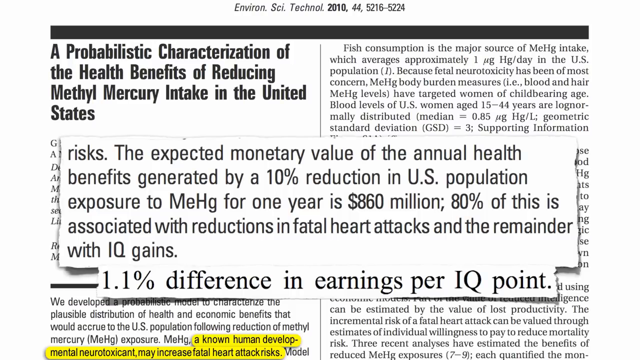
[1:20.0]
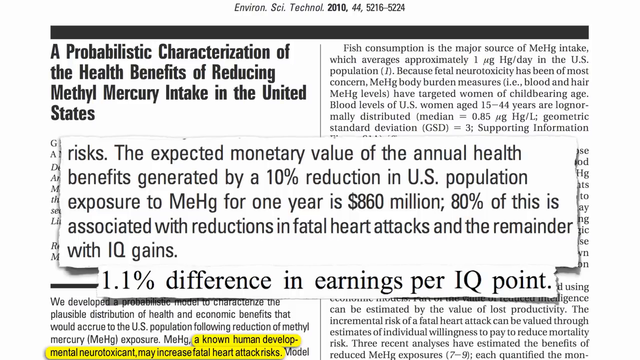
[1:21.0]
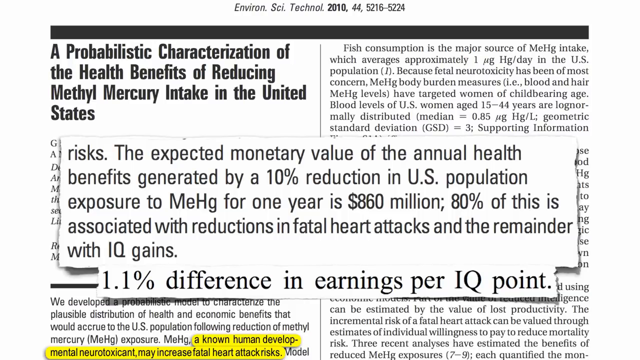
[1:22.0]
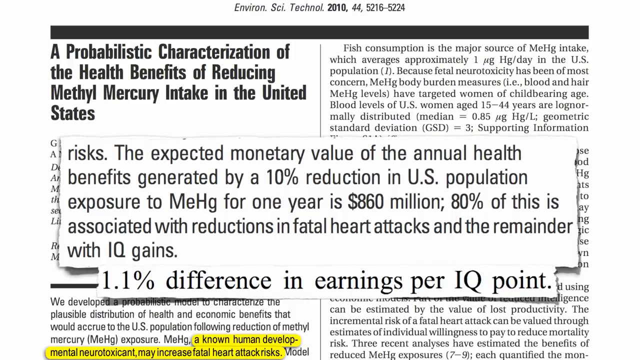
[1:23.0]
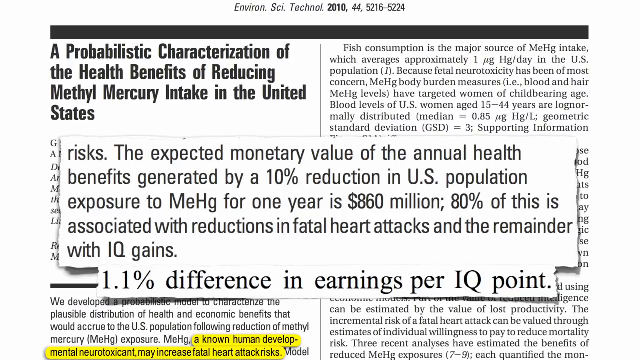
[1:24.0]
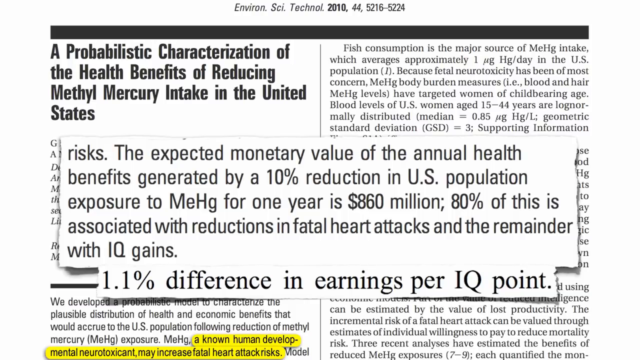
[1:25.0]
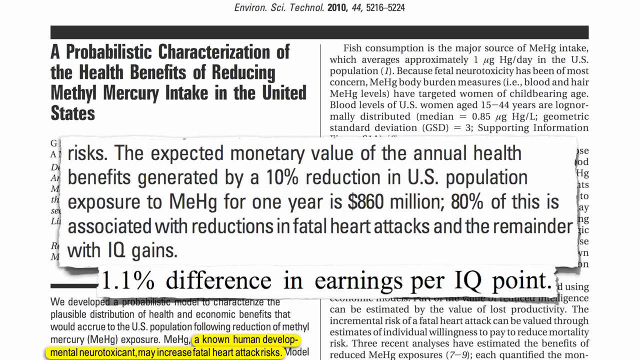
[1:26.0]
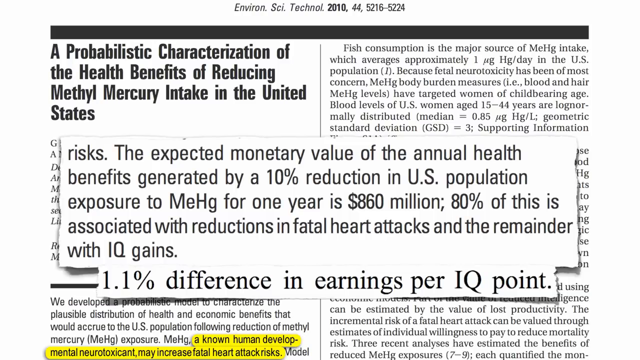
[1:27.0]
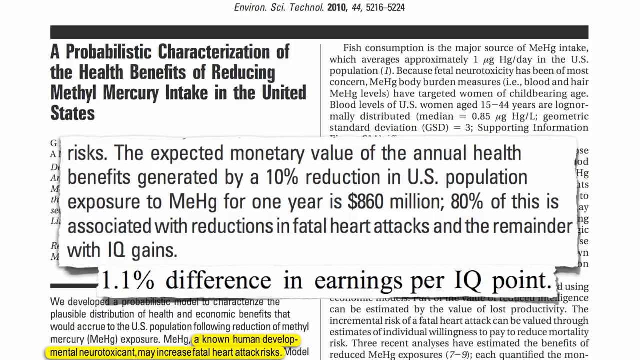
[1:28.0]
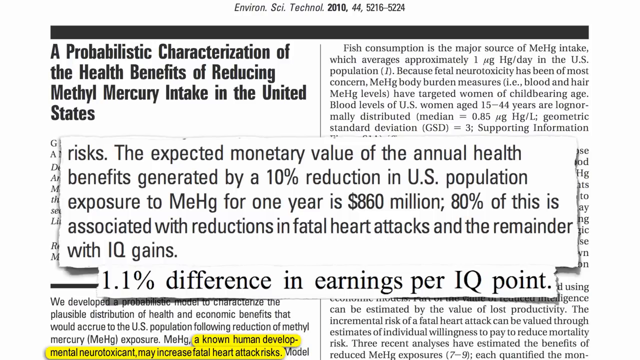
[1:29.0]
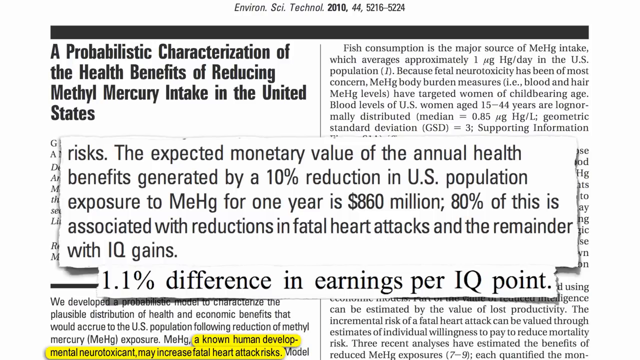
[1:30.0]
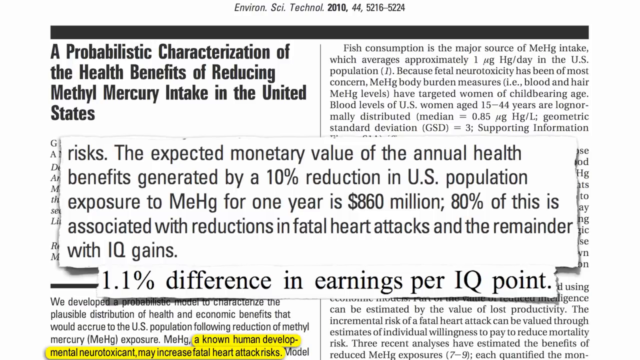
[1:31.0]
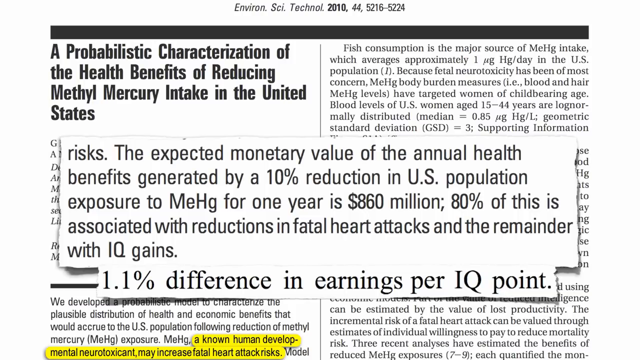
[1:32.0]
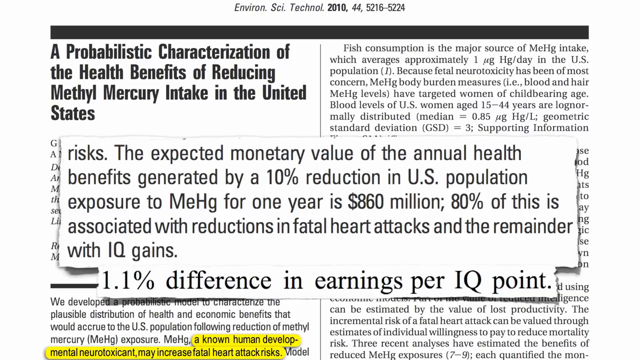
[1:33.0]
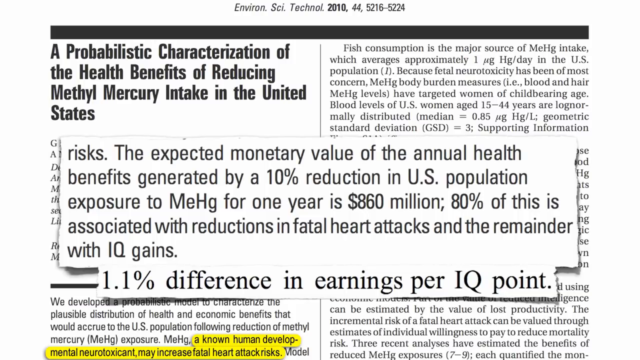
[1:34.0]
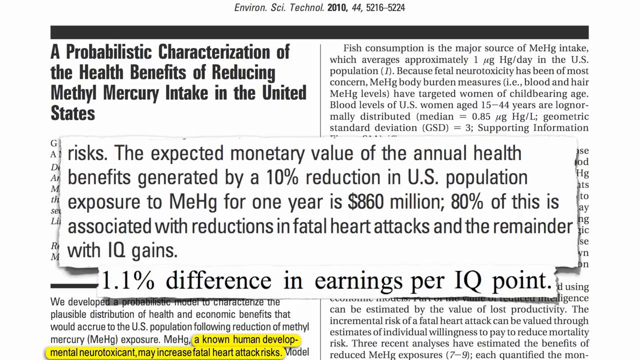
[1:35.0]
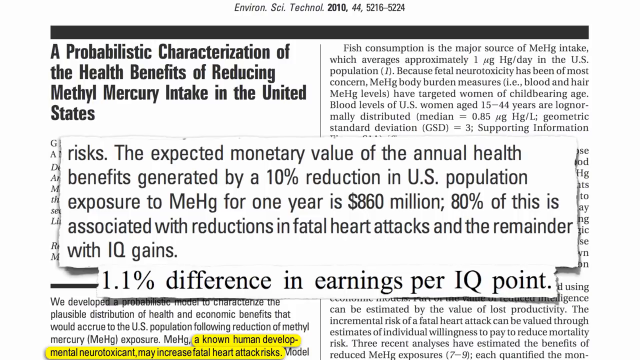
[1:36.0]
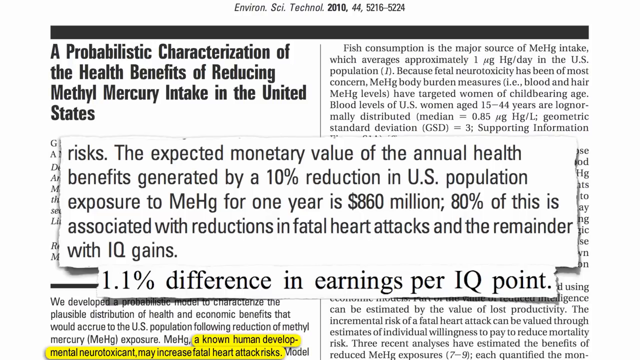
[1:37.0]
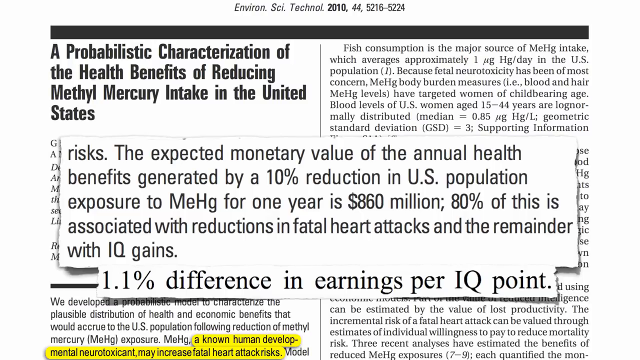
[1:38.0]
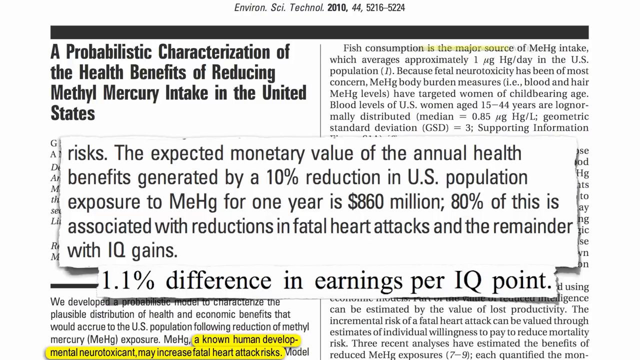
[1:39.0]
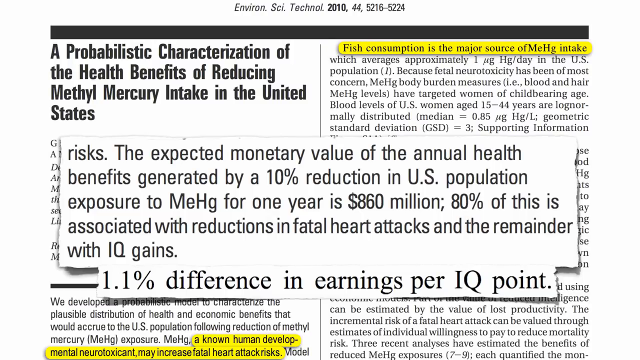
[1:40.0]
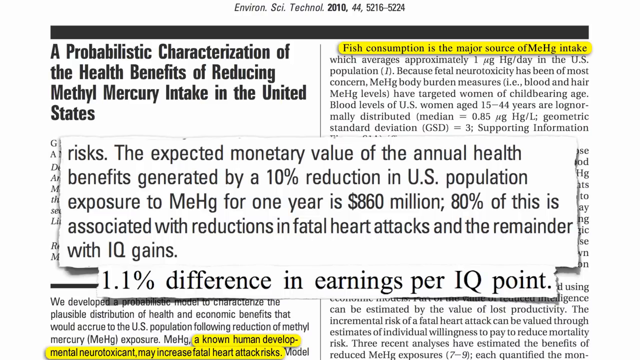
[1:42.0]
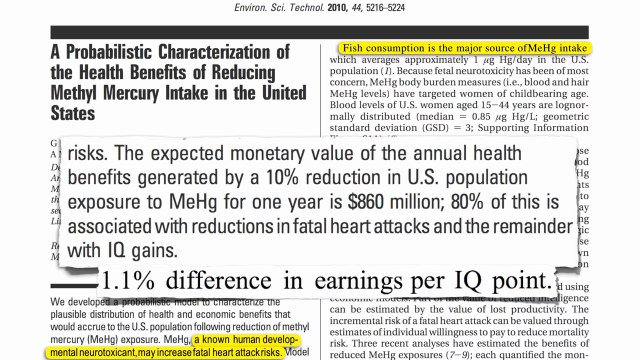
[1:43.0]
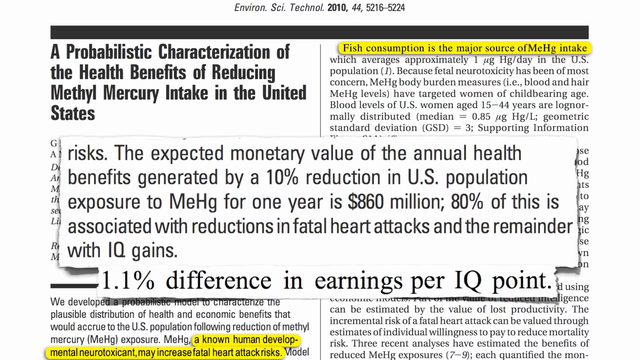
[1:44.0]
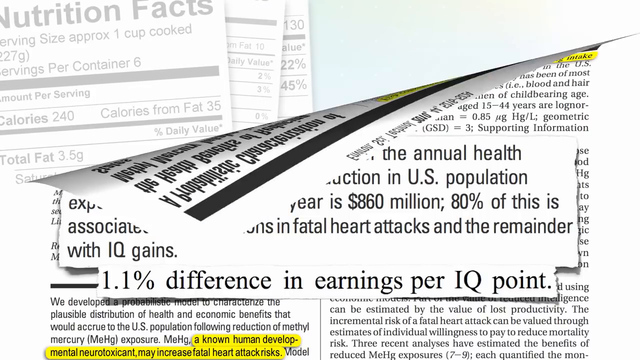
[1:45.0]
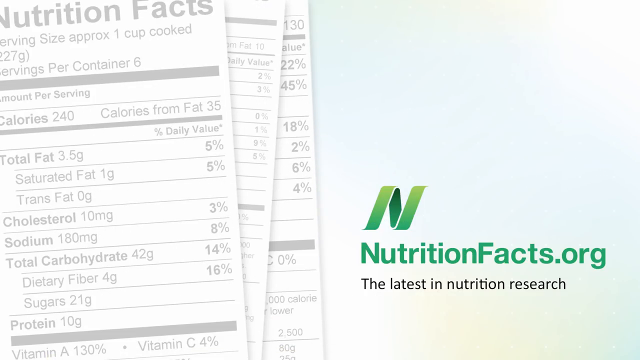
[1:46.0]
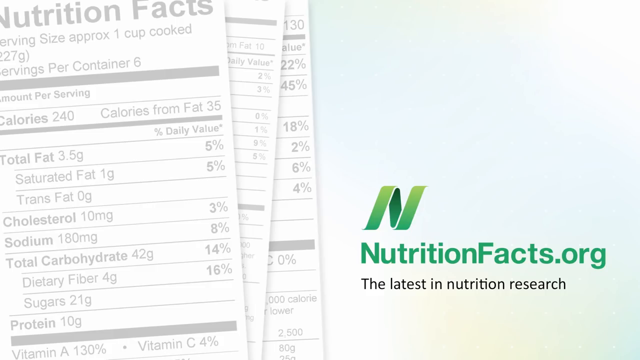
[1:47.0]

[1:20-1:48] Black text in various font sizes and boldness appears on a white background. The top left corner reads "a probabilistic characterization of the health benefits of reducing methylmercury intake in the United States." In the top right corner, small text covers fish consumption being a major source of mercury intake in the US population, along with further information. In the center of the screen there are two text boxes. One reads "the expected monetary value of the annual health benefits generated by a 10% reduction in US population exposure to mercury for one year is $860 million. 80% of this is associated with reductions in fatal heart attacks and the remainder with IQ gains." The other reads "1.1% difference in earnings for IQ point." Highlighted text then appears, reading "a known human developmental neurotoxicant may increase fatal heart attacks."